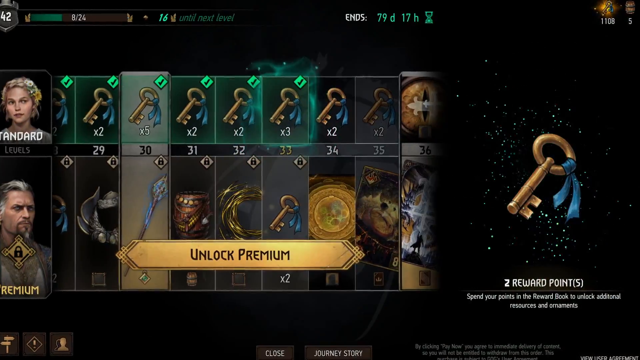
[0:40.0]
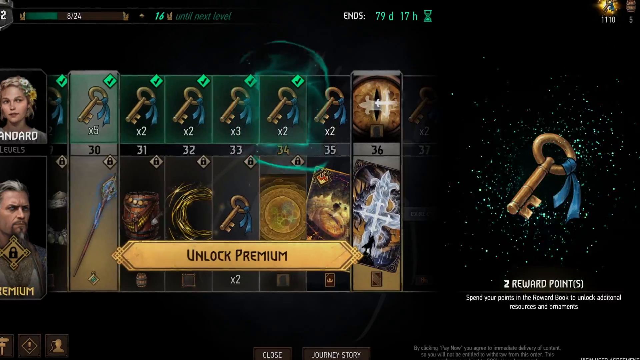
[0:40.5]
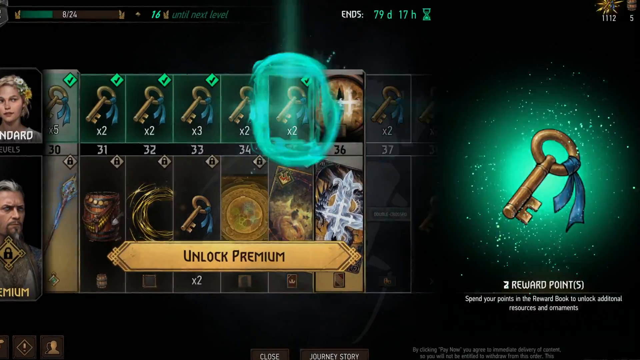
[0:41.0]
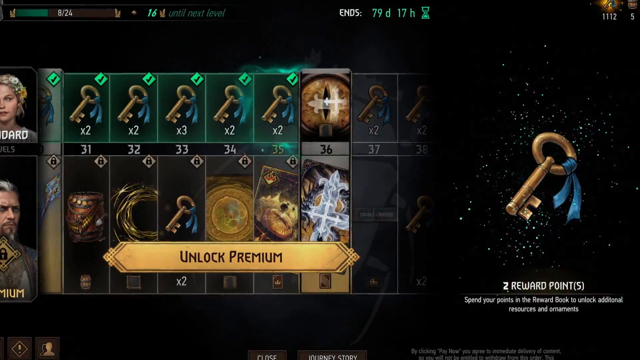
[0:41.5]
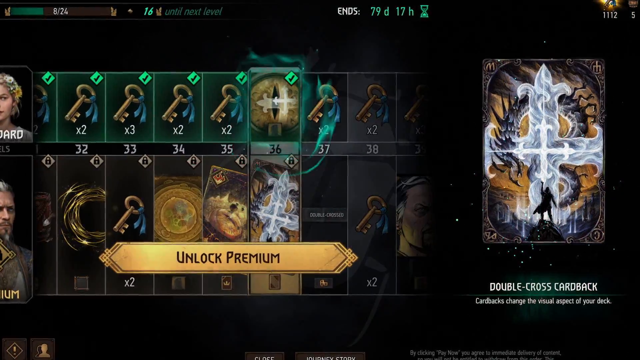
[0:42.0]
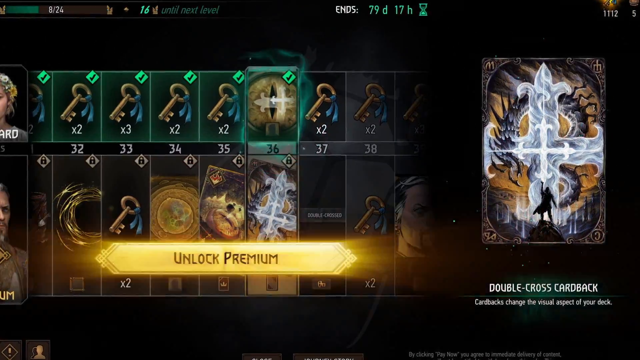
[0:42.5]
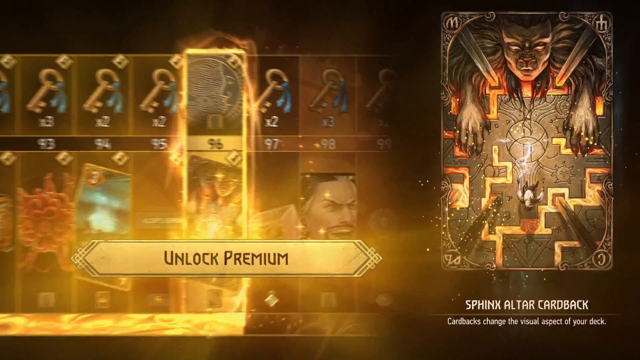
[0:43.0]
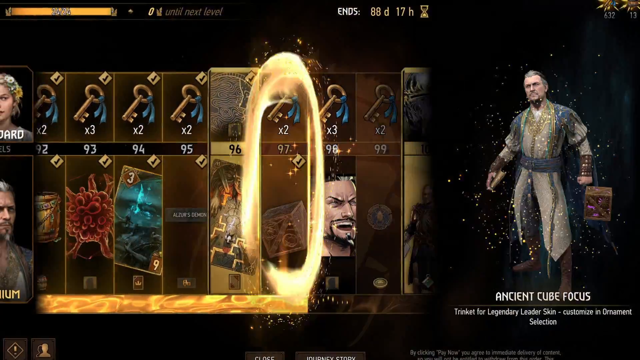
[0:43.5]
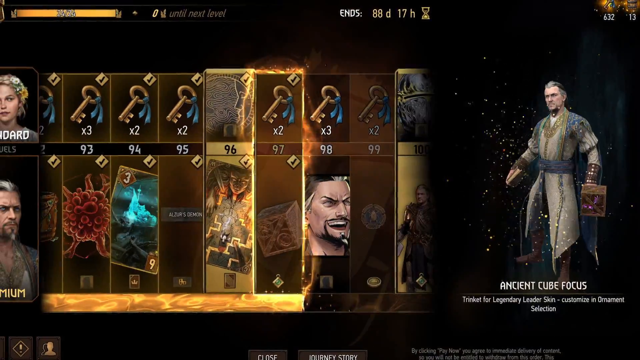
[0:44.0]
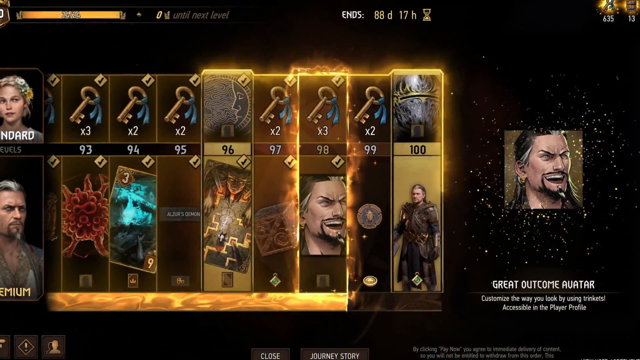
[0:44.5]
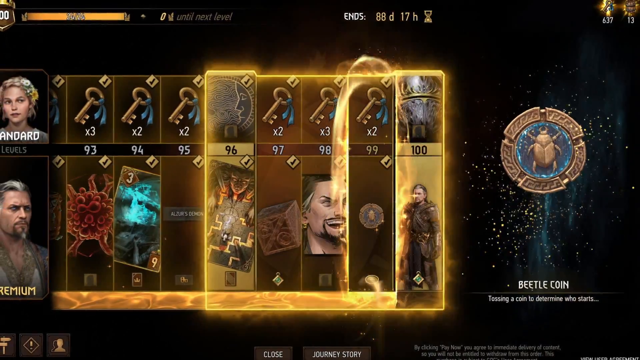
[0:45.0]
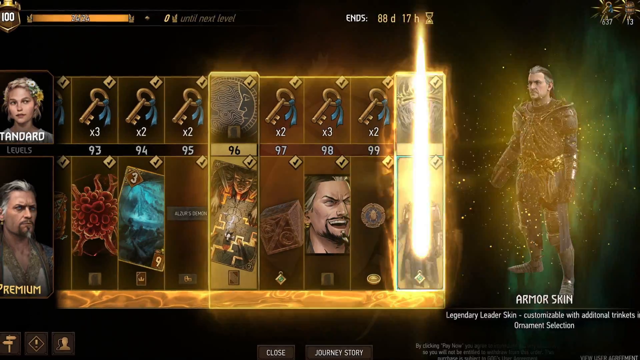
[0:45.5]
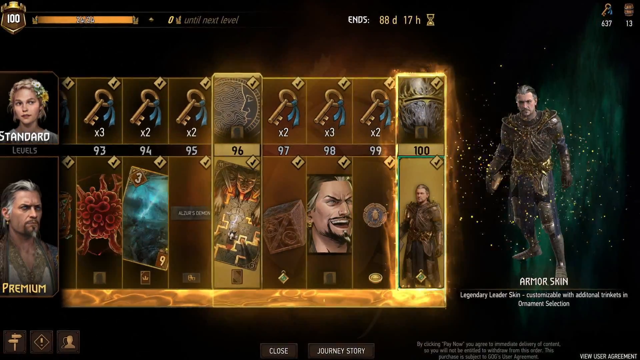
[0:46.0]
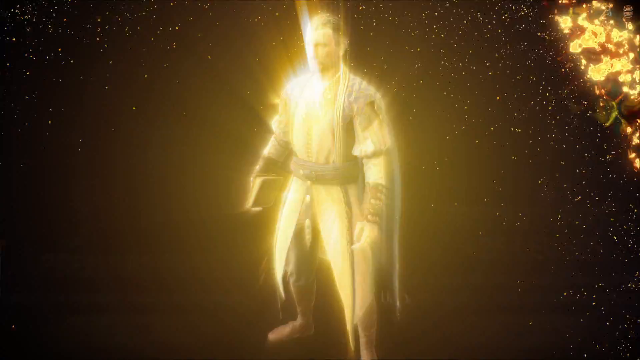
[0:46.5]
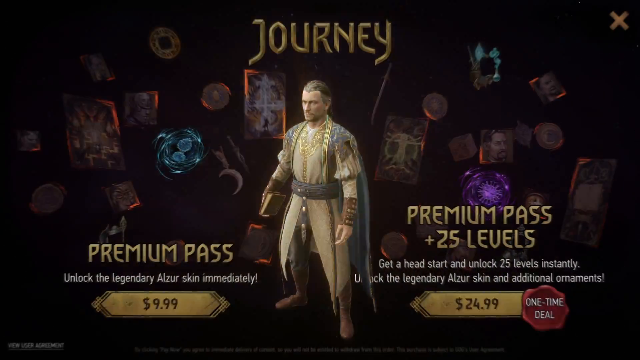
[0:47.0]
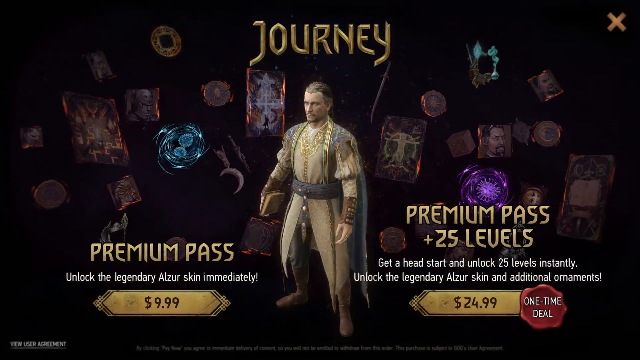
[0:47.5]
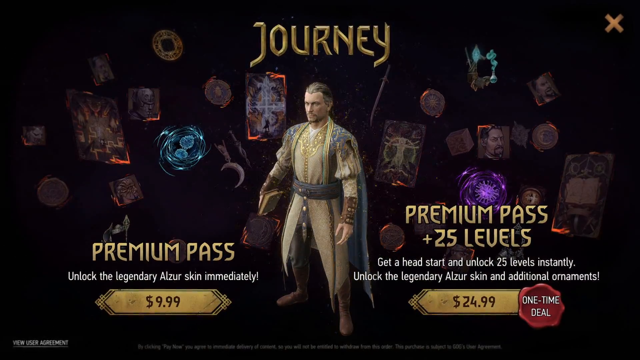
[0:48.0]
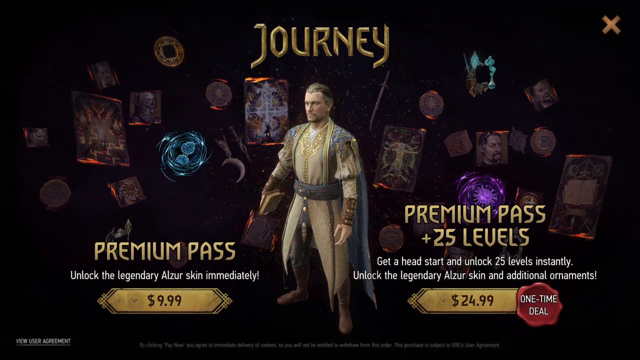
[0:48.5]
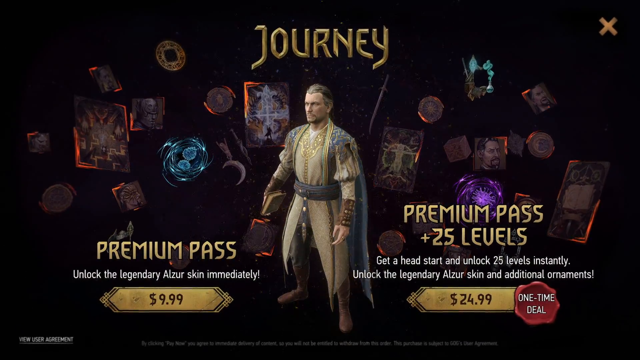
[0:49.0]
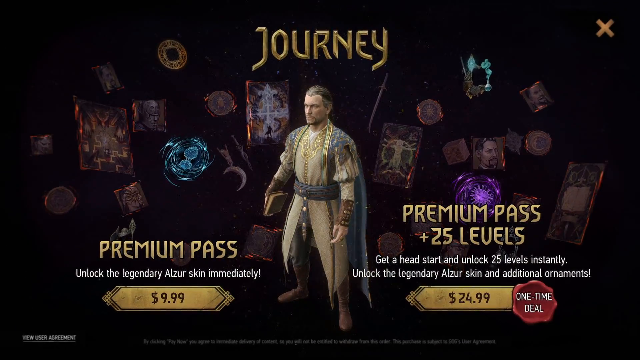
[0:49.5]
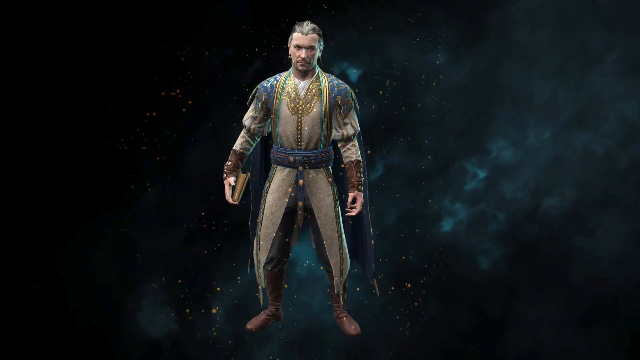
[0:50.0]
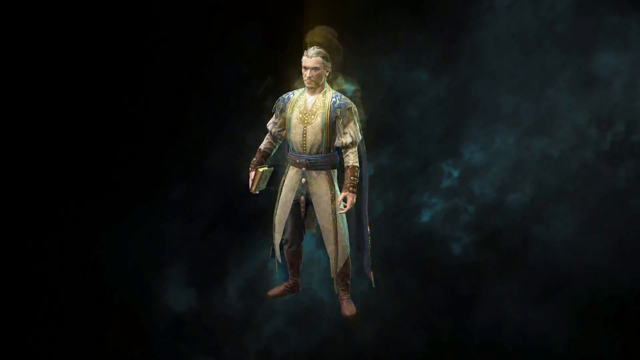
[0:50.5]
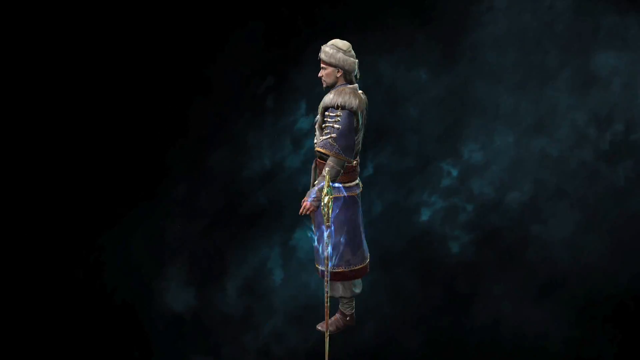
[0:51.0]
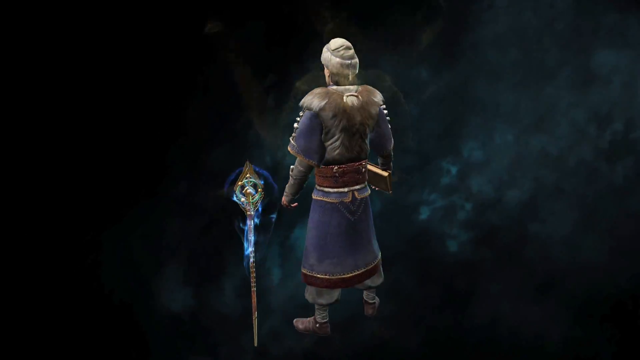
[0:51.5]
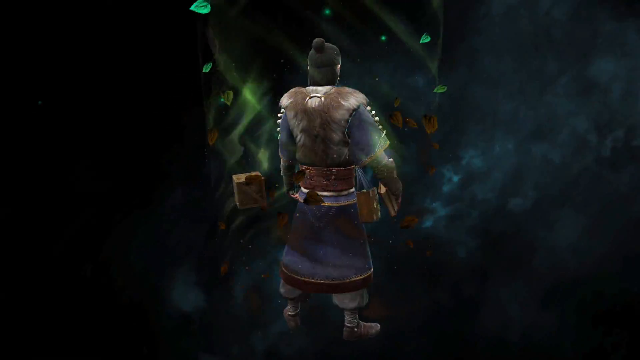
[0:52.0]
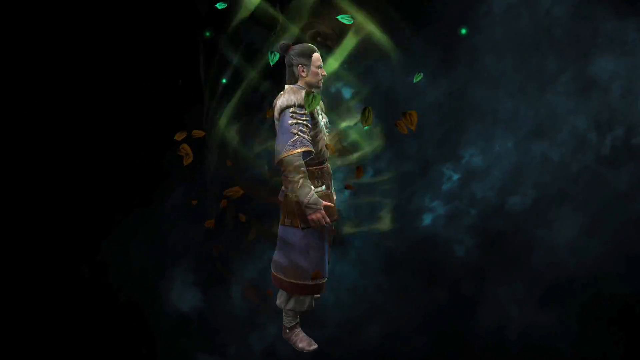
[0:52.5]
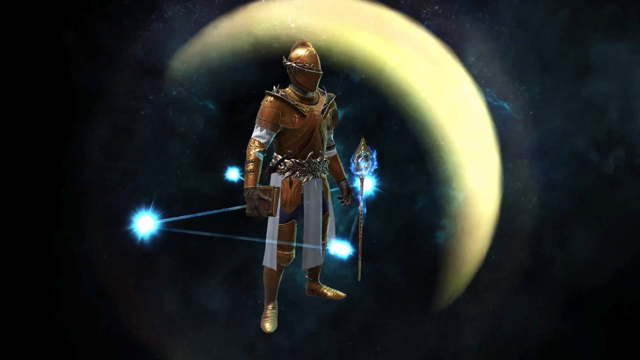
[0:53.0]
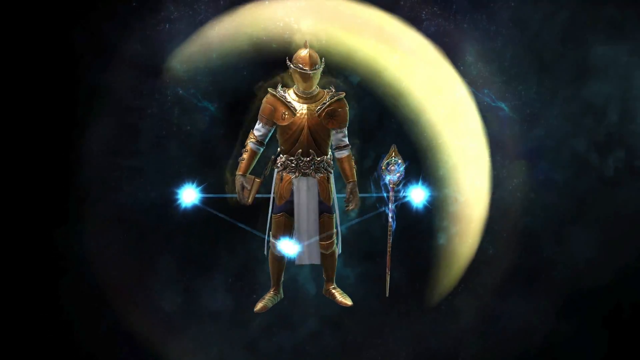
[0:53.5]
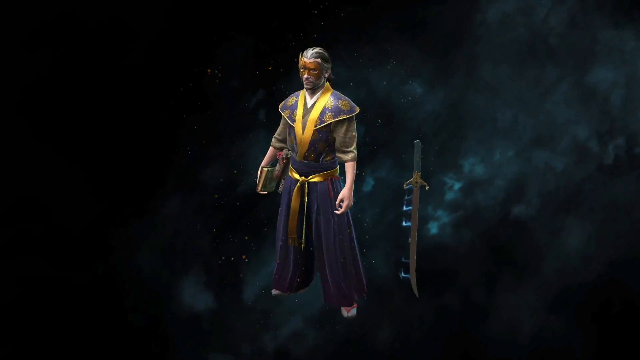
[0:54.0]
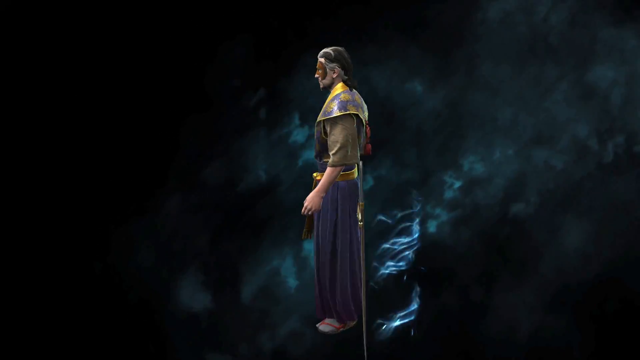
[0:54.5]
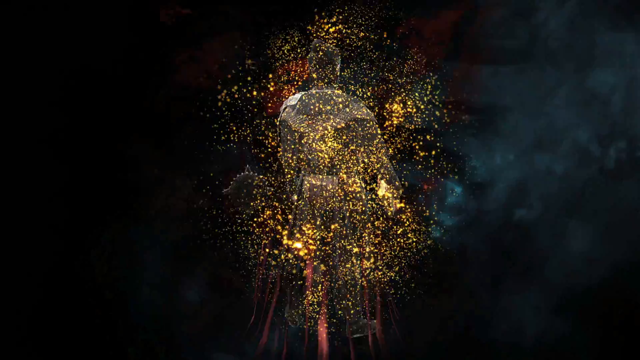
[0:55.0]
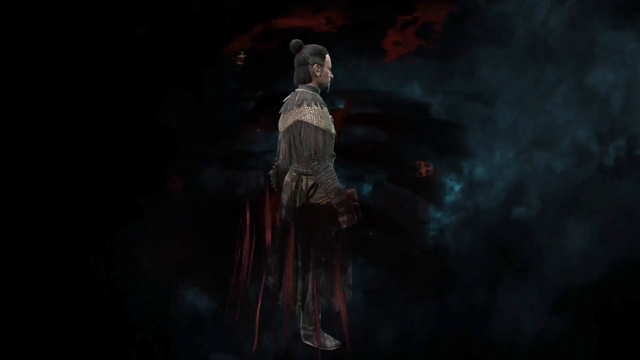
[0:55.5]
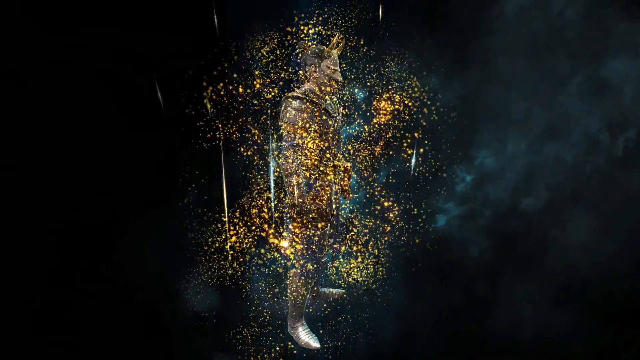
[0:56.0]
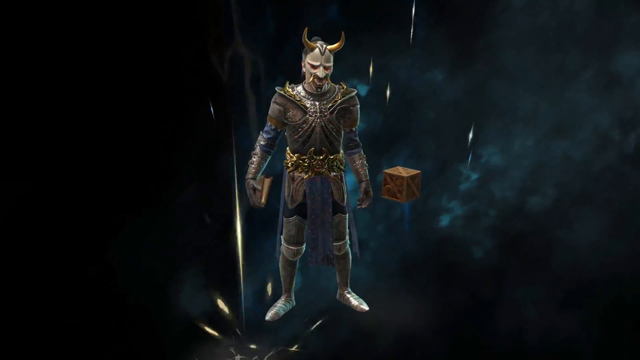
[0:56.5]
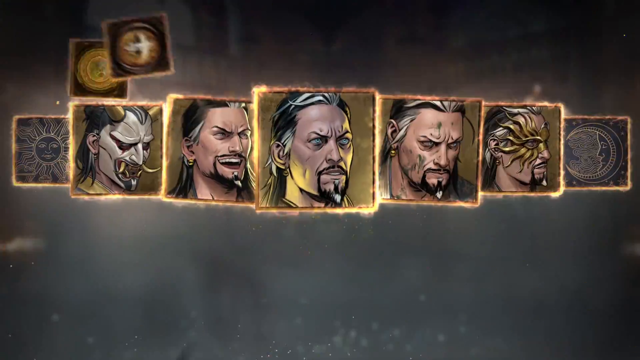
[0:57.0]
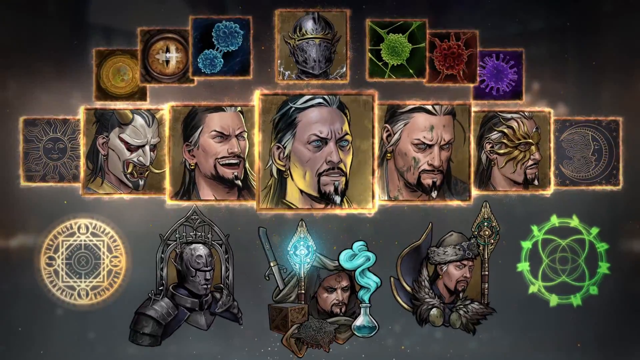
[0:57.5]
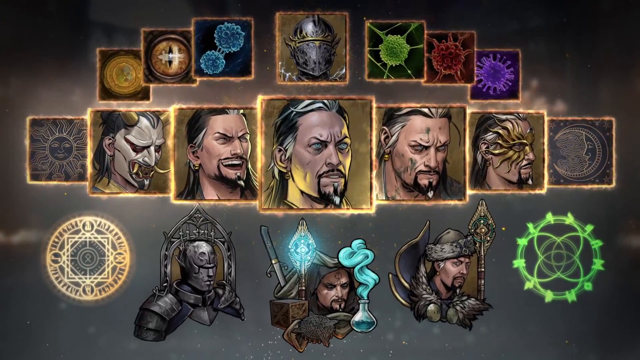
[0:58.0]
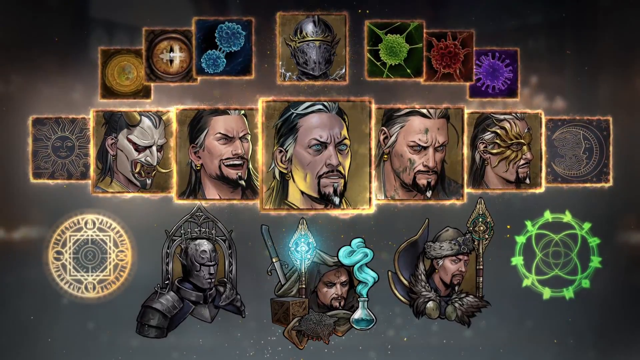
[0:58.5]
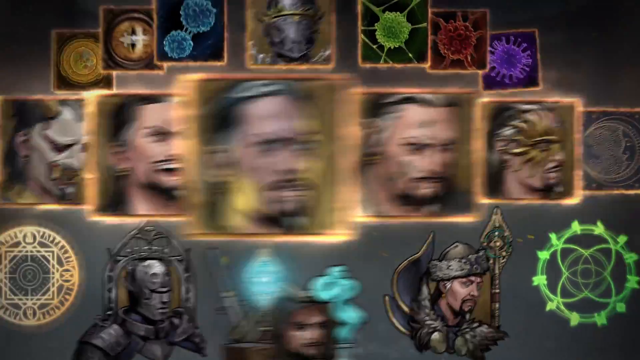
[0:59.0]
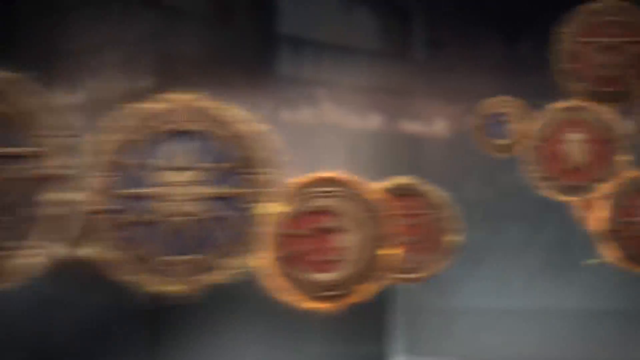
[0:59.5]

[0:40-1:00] The trailer for a mobile fantasy card game shows the mobile game view with cards and reward points, where a reward system lets the player obtain keys and unlock more prizes with premium. The player unlocks even more rewards, eventually reaching bigger rewards beyond the keys, revealing more character options. A black background then shows the game's name, apparently Journey. A premium pass option is shown for $9.99, along with a premium pass plus 25 levels, with which additional character options can be unlocked. The main playable character is spun around while he changes into many different outfits, showing what can be unlocked with premium. An animation of different items used in the game follows.